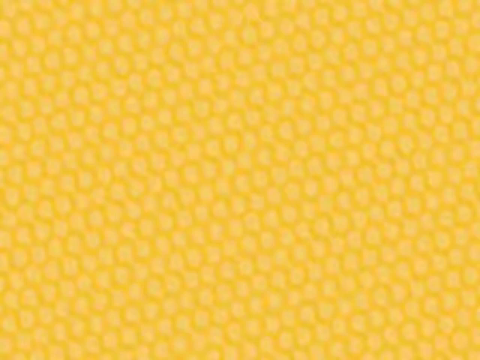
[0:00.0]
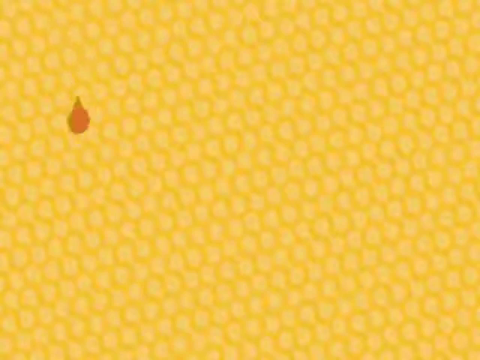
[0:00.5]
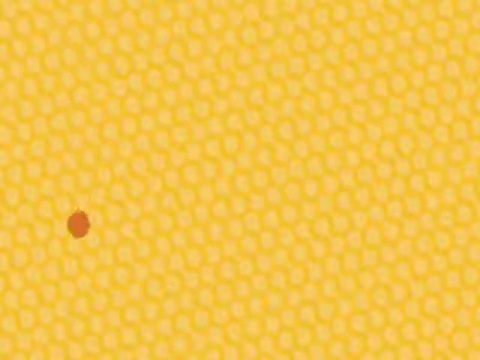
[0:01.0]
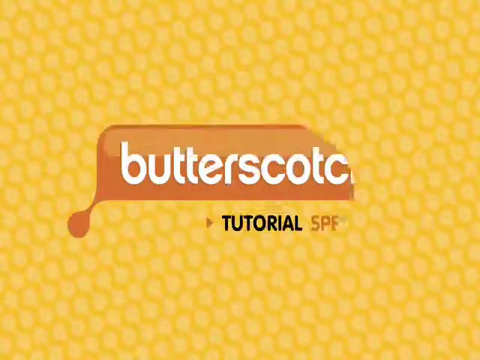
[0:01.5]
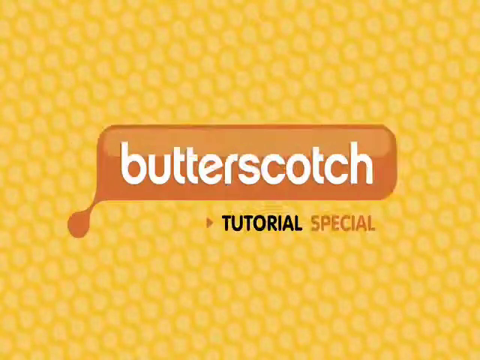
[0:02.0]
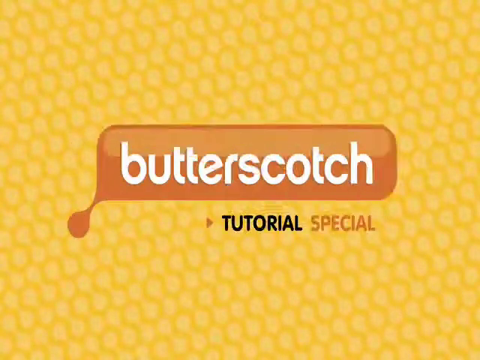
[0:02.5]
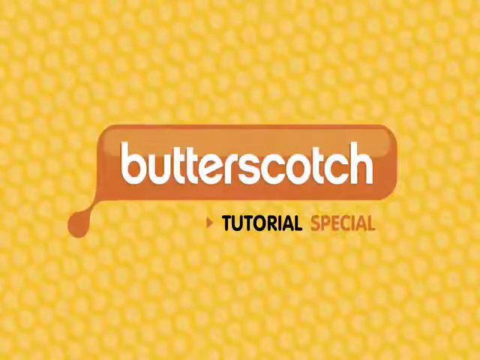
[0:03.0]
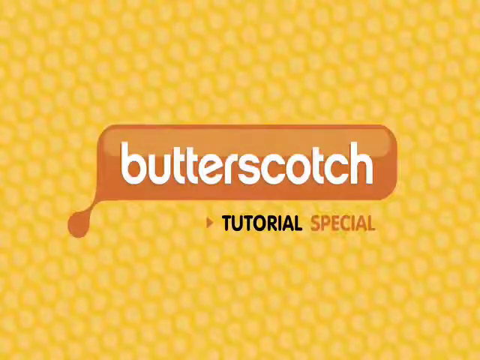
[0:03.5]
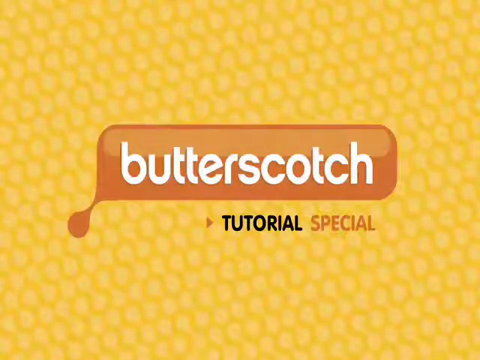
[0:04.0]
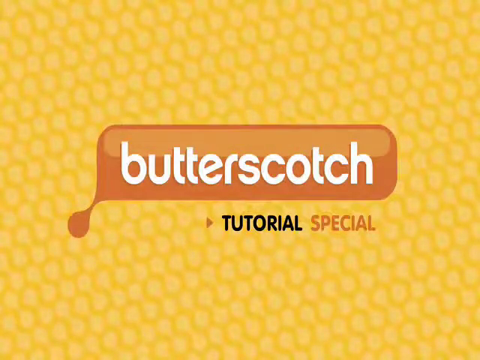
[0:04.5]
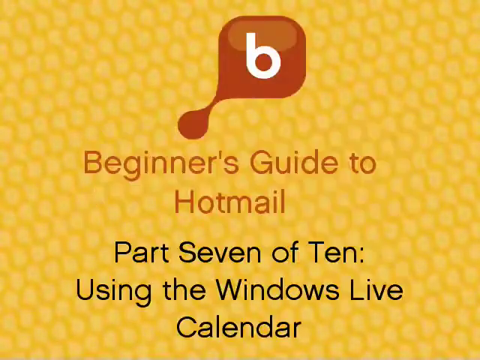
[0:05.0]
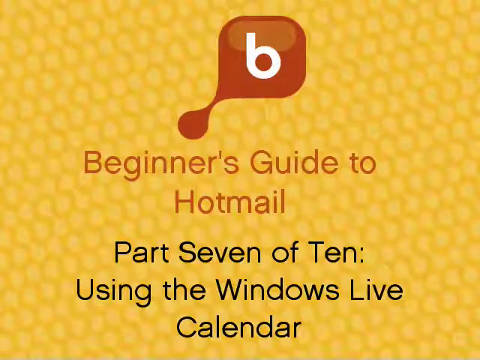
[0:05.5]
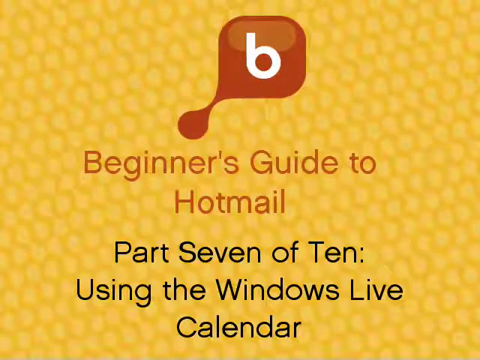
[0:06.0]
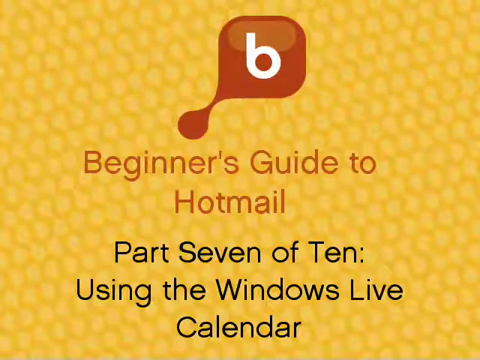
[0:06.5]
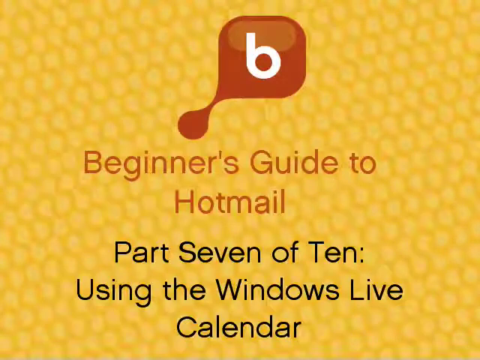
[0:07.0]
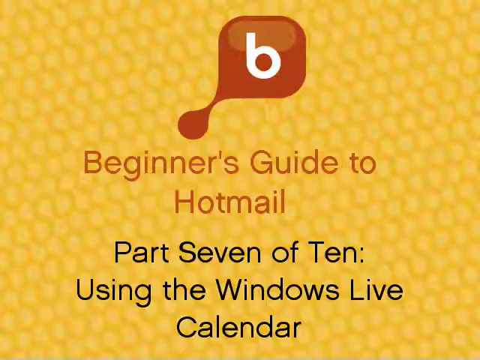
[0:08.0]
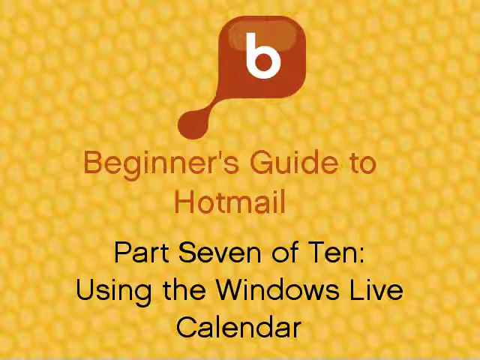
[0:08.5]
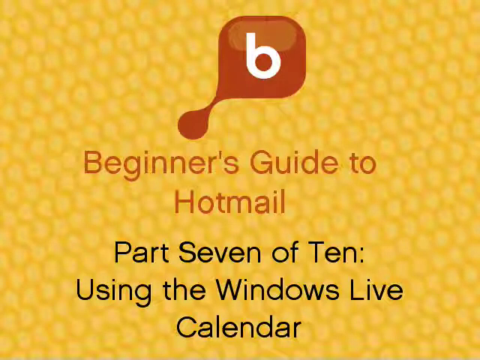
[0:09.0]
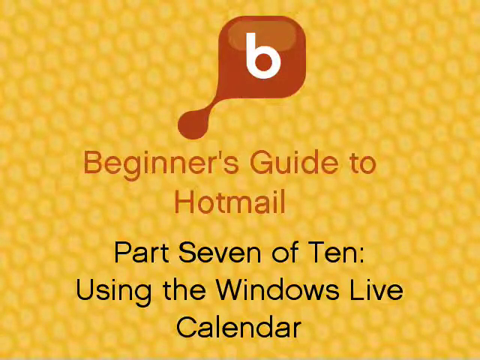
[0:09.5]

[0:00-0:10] The video is in an online presentation style. It opens on a solid yellow background with a faint lighter yellow pattern. From the bottom left-hand corner, an overlay logo appears to gradually emerge until it fills the middle of the screen. The logo reads "BUTTERSCOTCH" in white text inside an orange speech bubble, and below it, aligned towards the right, is the text "TUTORIAL SPECIAL". The screen then changes to the same yellow background with different text. At the top centre is an orange speech bubble logo with the letter B in white. Below it, orange text reads "BEGINNERS GUIDE TO HOTMAIL", and below that, black text reads "PART 7 OF 10: USING THE WINDOWS LIVE CALENDAR".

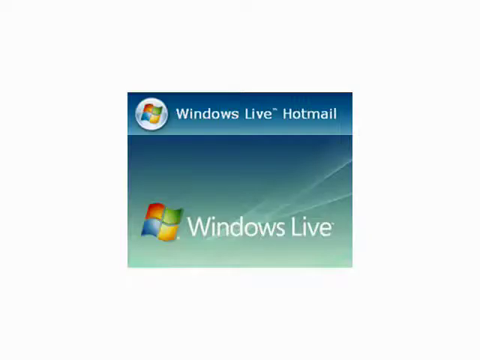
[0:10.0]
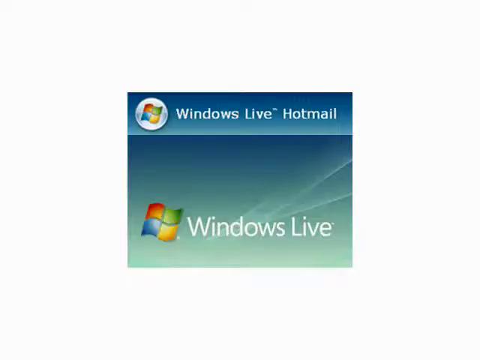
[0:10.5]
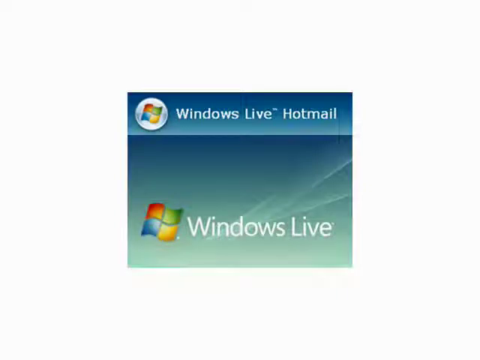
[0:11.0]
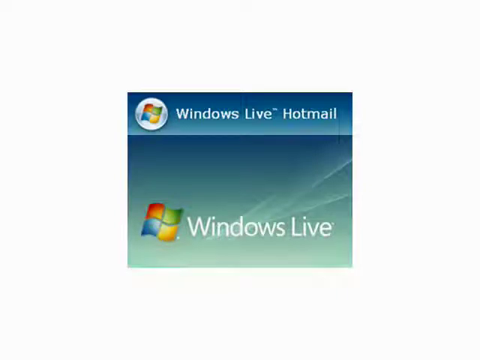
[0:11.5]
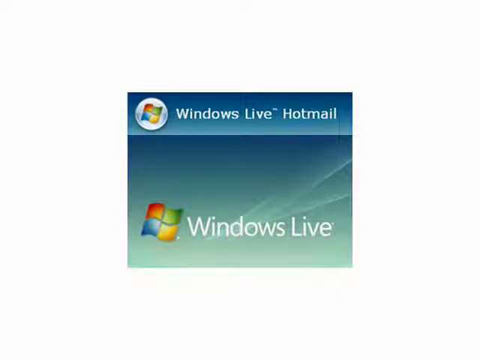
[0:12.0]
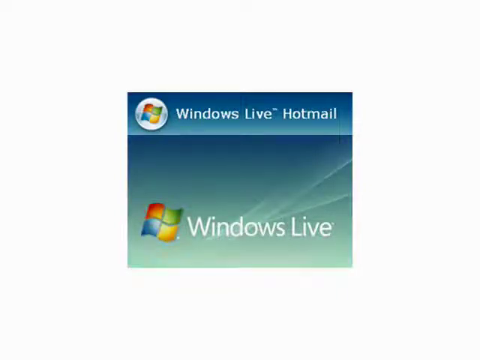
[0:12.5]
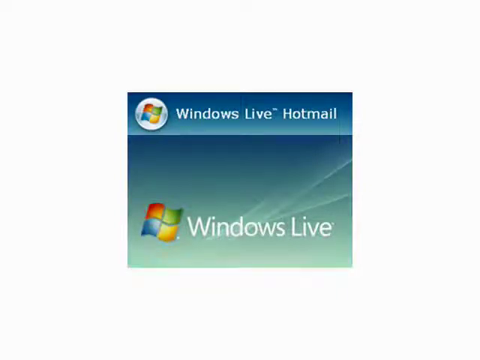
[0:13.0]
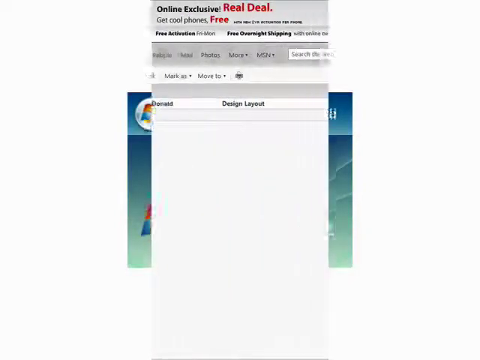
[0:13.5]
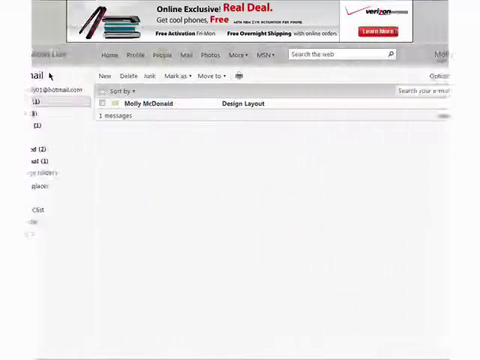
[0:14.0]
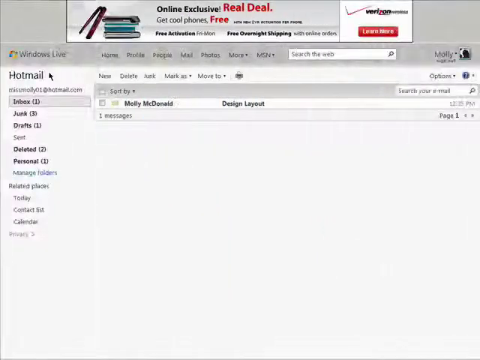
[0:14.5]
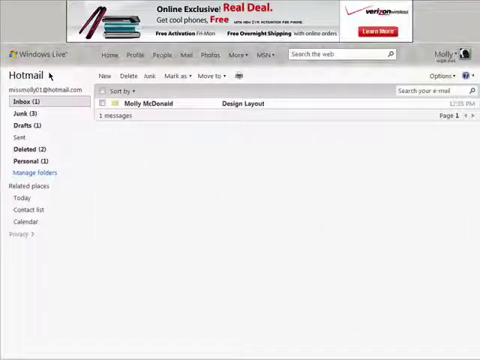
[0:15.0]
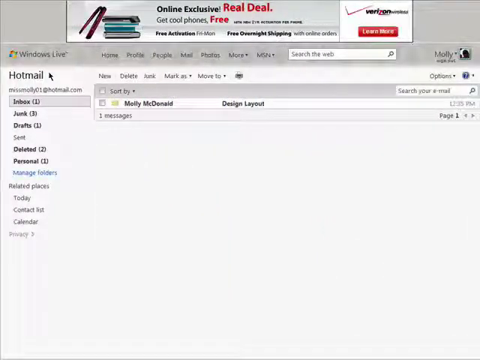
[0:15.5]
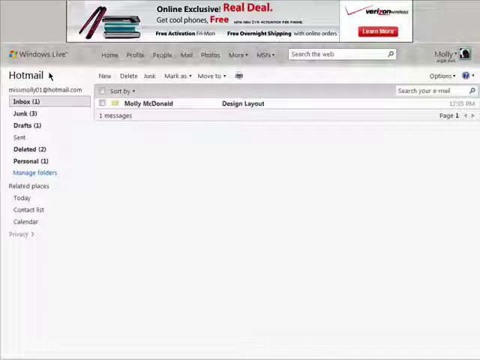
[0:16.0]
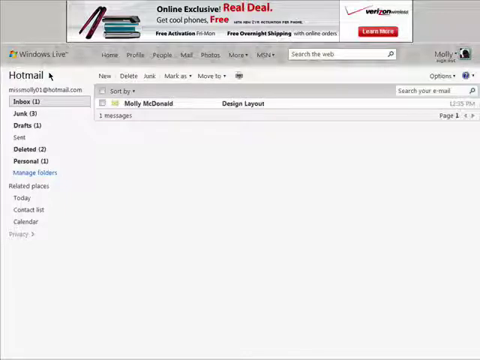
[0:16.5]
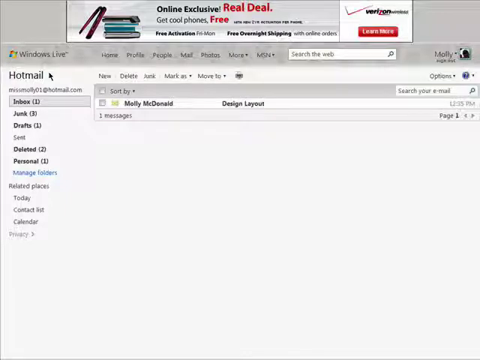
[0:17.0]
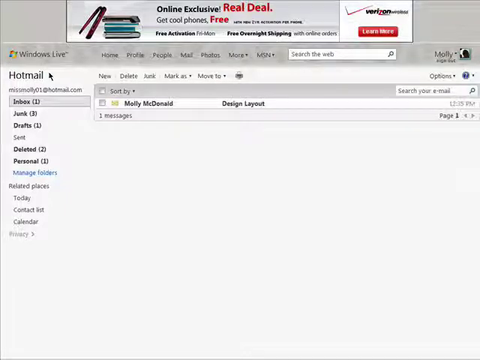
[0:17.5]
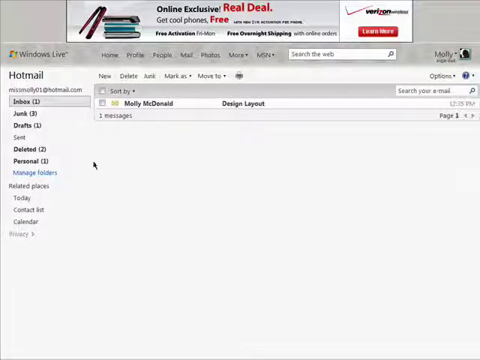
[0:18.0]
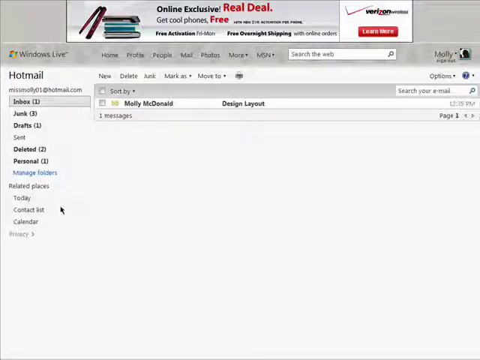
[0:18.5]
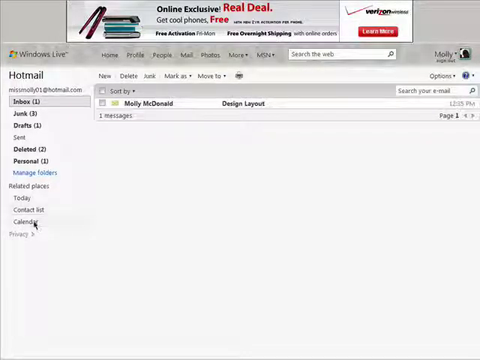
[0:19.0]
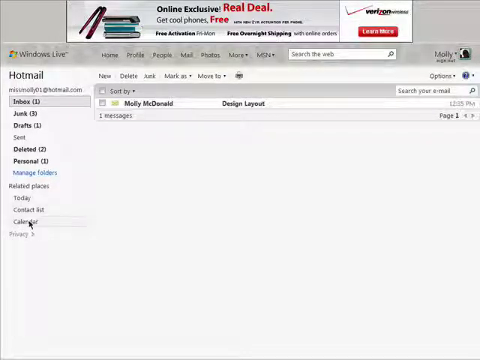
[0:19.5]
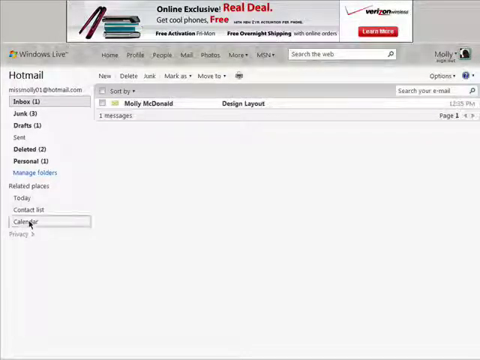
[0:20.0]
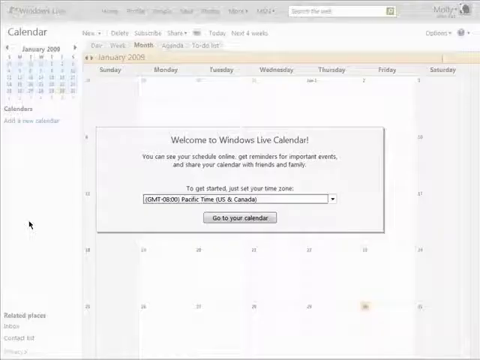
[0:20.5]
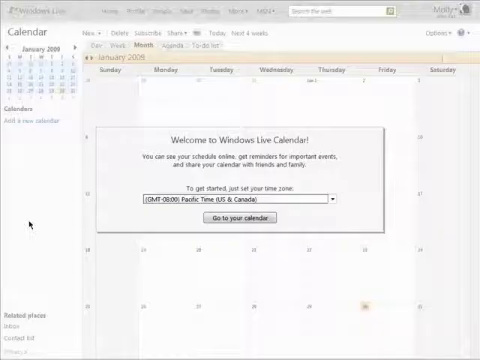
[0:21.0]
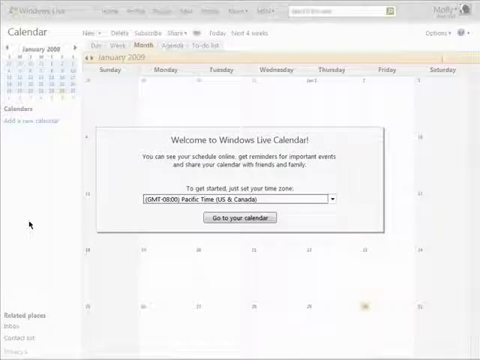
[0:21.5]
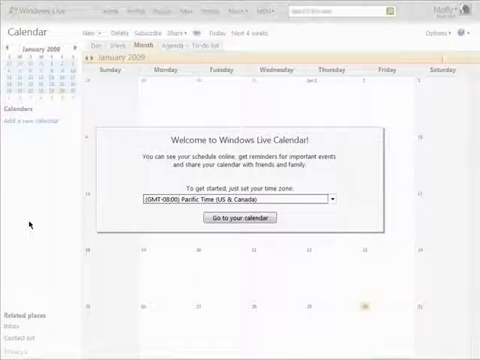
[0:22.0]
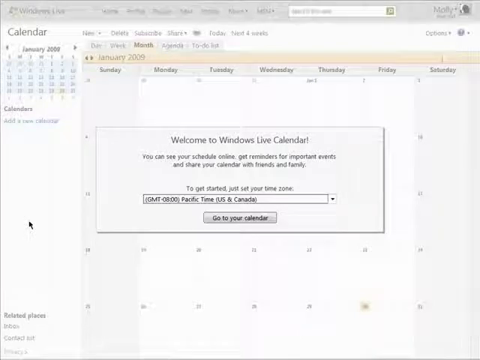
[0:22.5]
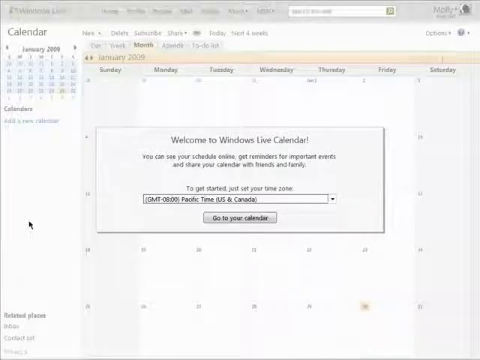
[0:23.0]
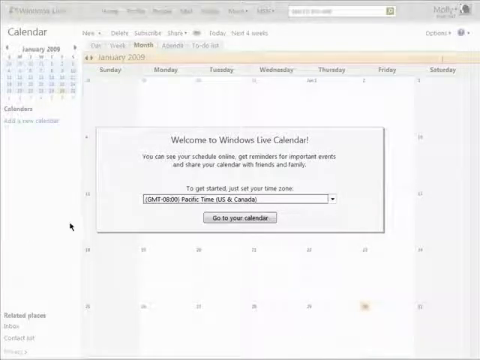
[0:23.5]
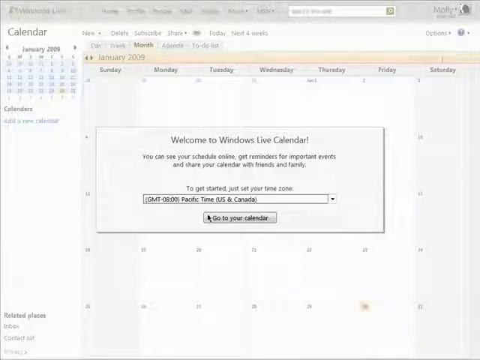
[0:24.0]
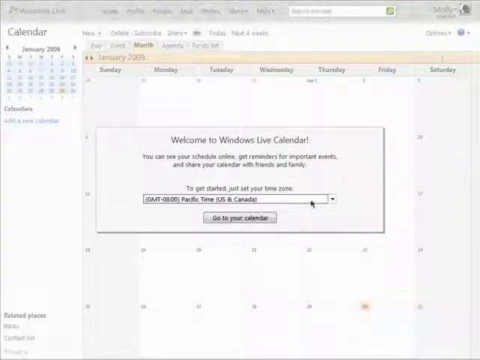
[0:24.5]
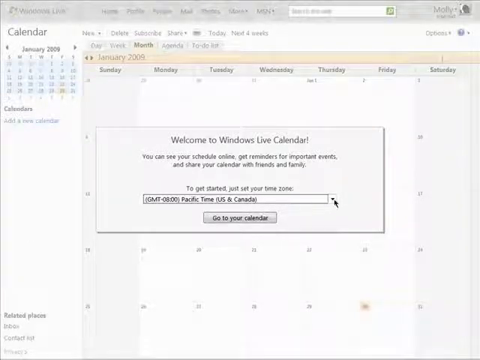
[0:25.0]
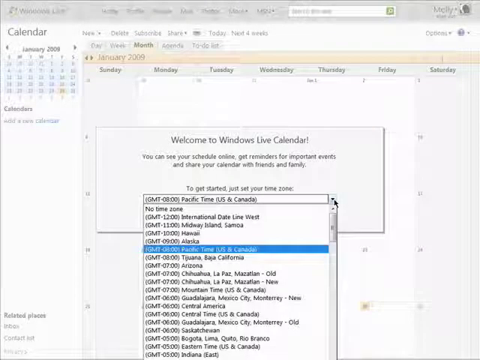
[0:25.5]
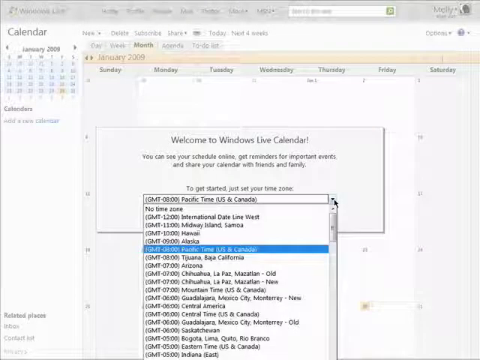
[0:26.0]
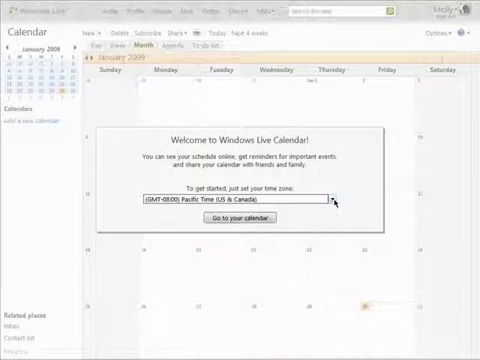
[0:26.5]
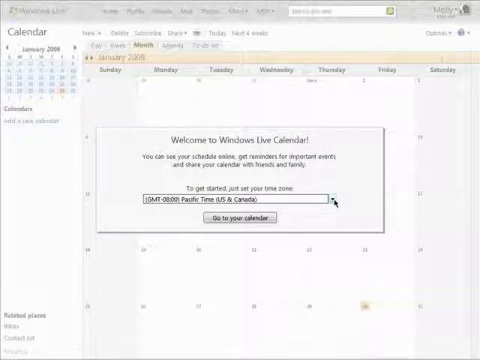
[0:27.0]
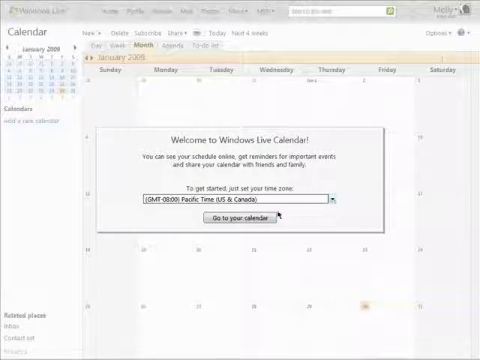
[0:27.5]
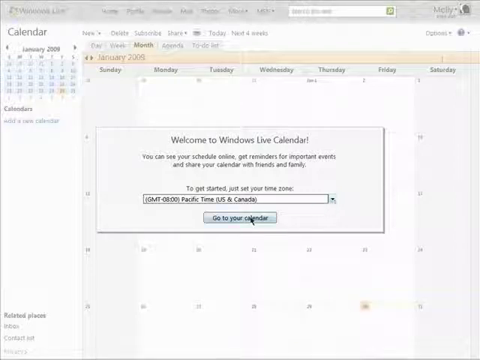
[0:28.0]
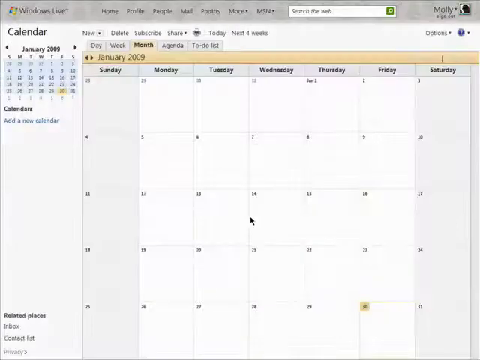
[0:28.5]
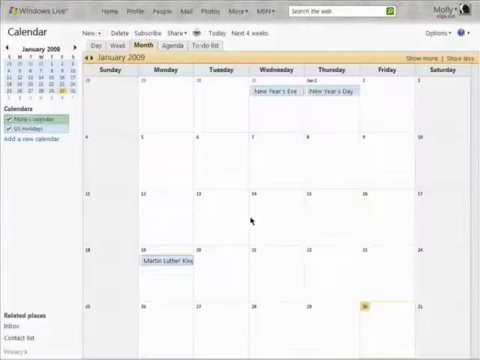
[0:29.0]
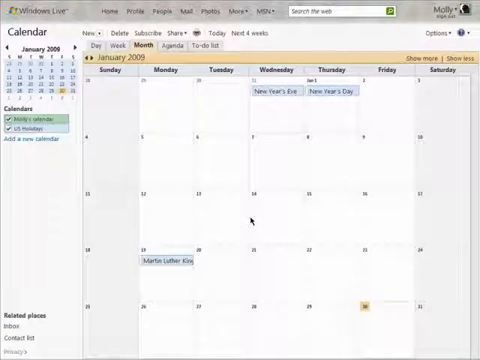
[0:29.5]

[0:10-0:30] A white background screen appears, and a square image showing a Windows Live Hotmail logo appears in the center, taking up about 50% of the screen. The screen transitions with a blend-out effect, the new screen appearing from the middle and blending outwards. The new screen shows a computer screen with the Windows Live Mail application. The inbox is selected and shows one email from Molly MacDonald. The cursor moves down to the left menu, goes down to the calendar and selects it. A pop-up with a gray background appears, titled "Welcome to Windows Live Calendar", with a dropdown for selecting the time zone and a confirm button at the bottom. The user selects the Pacific US and Canada time zone. The pop-up disappears and a Windows Live Calendar window appears showing the month of January 2009.